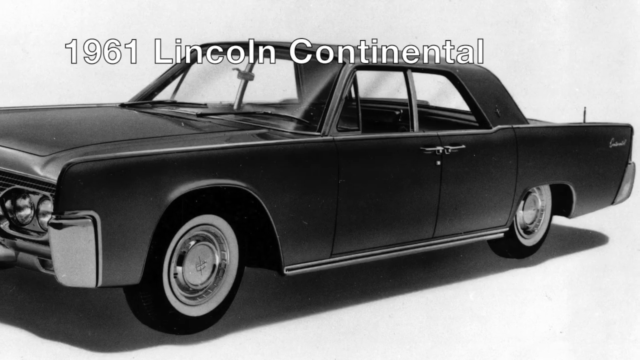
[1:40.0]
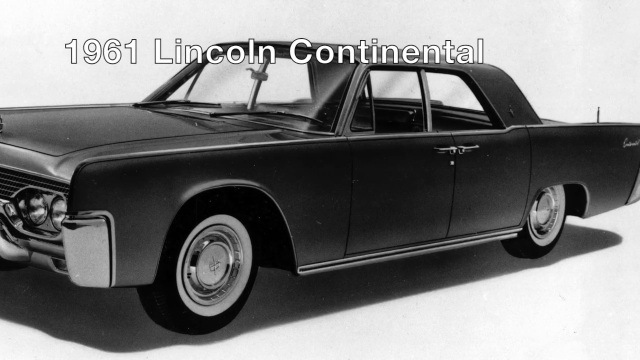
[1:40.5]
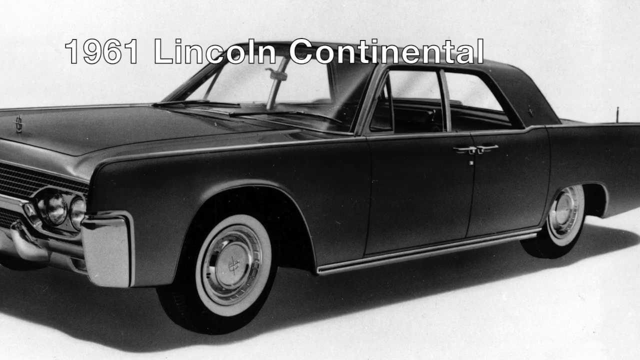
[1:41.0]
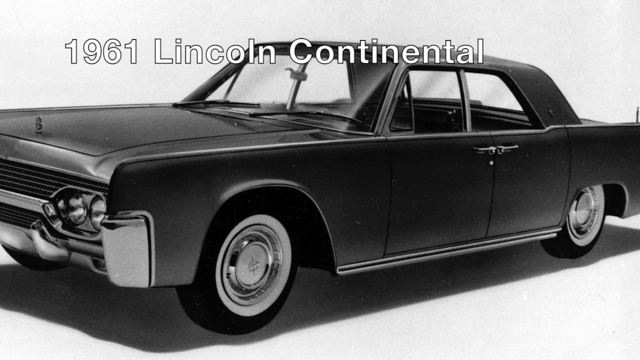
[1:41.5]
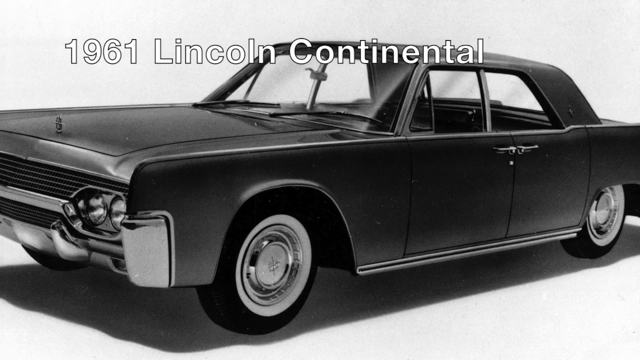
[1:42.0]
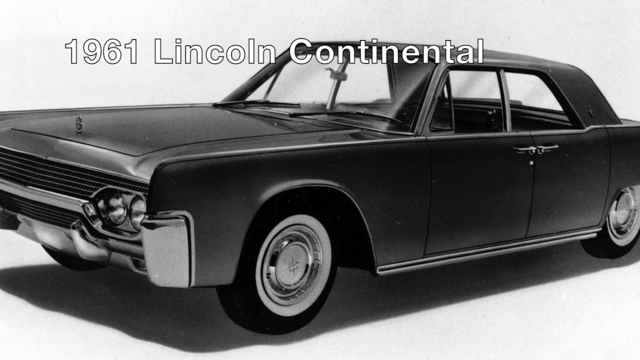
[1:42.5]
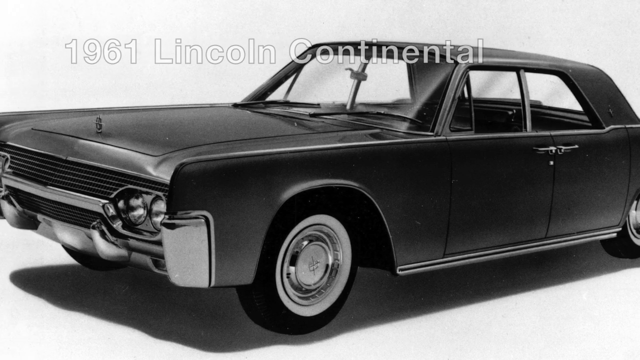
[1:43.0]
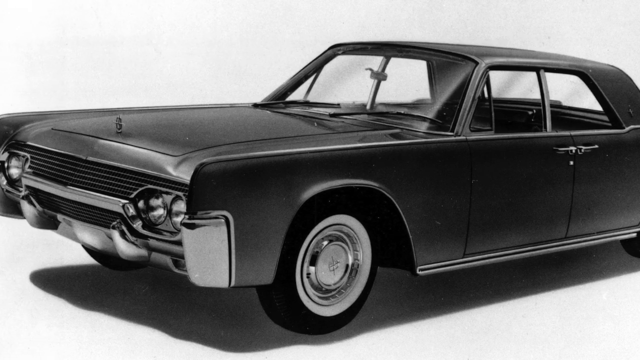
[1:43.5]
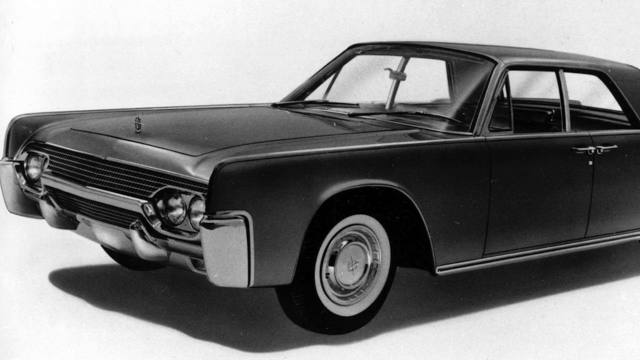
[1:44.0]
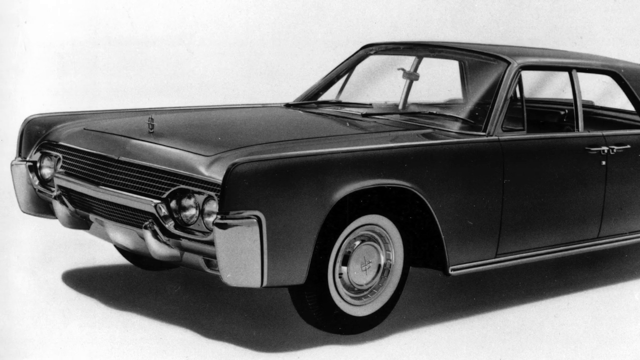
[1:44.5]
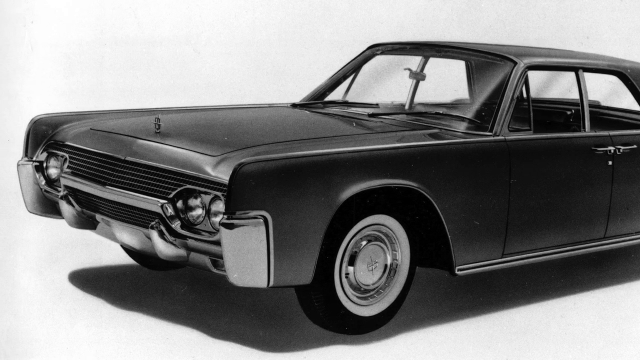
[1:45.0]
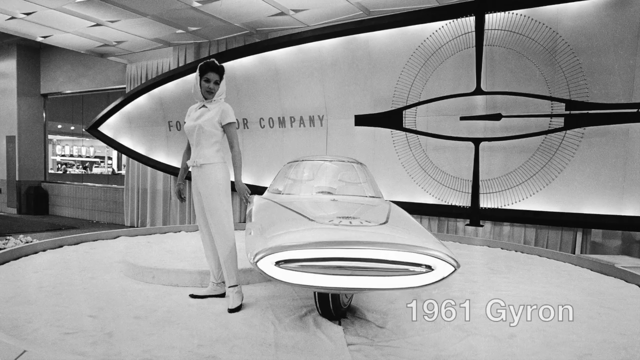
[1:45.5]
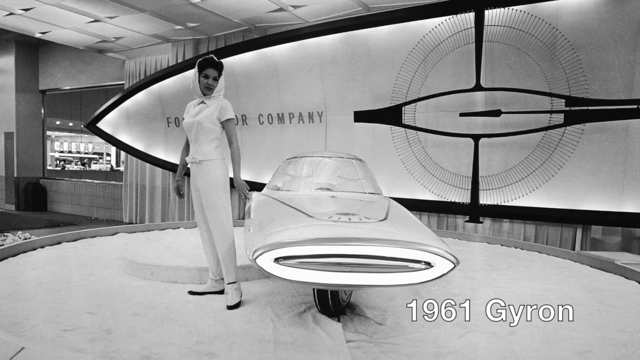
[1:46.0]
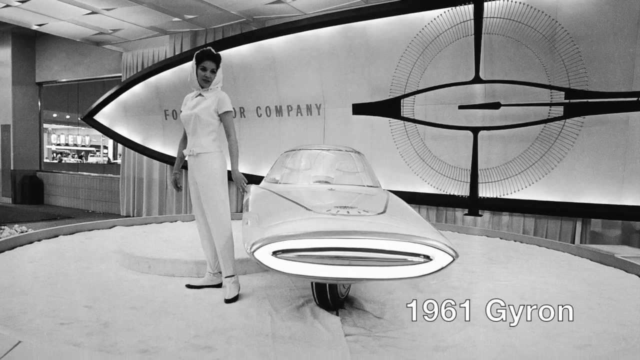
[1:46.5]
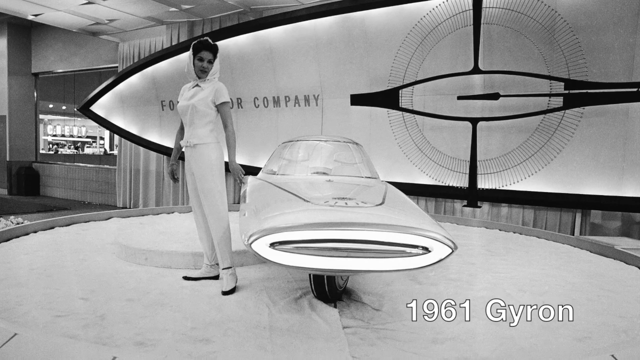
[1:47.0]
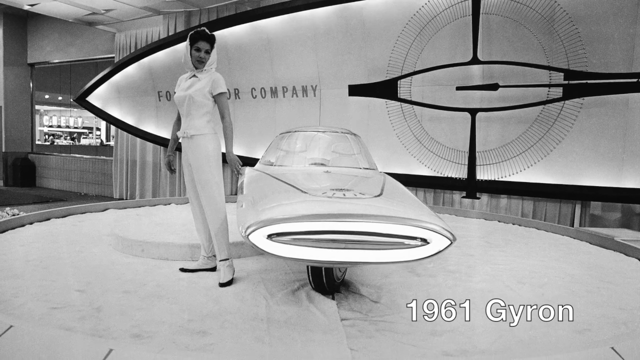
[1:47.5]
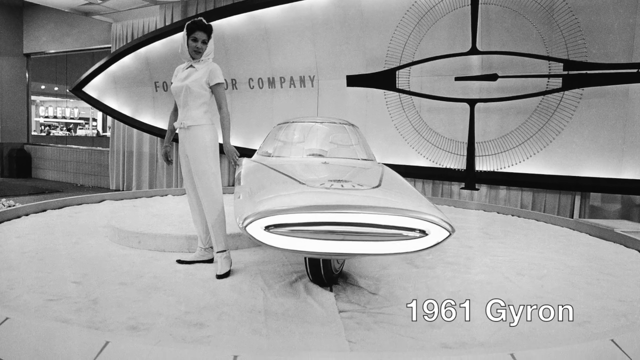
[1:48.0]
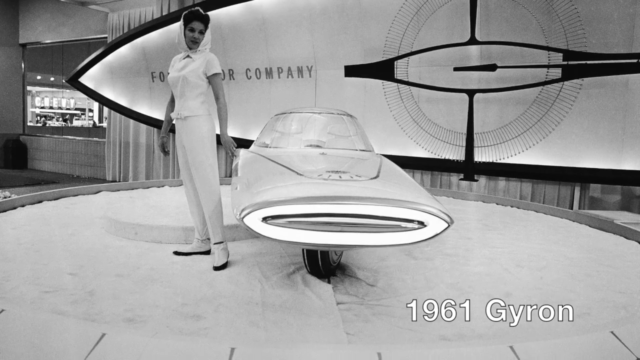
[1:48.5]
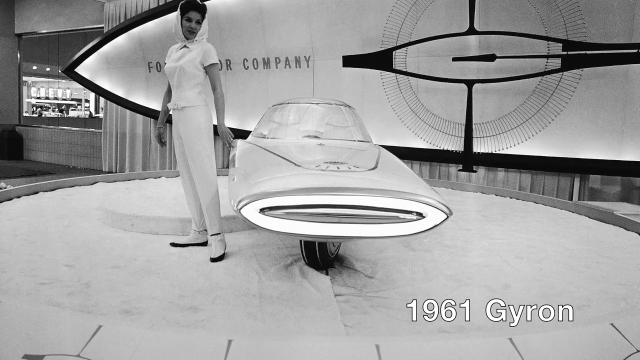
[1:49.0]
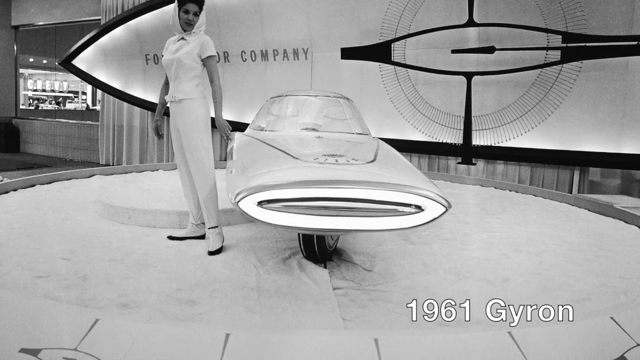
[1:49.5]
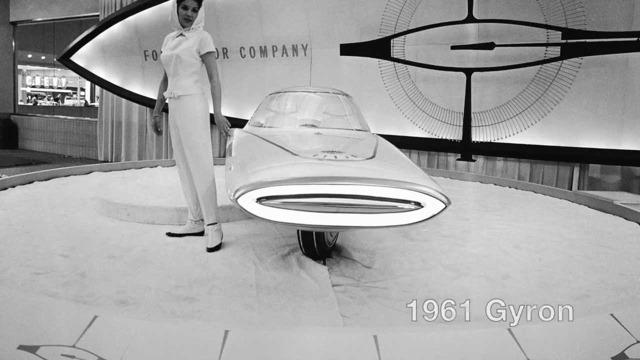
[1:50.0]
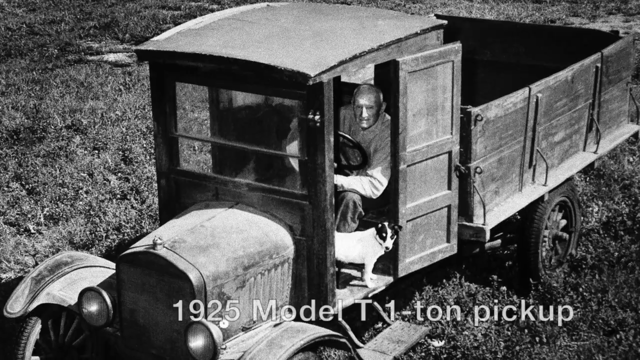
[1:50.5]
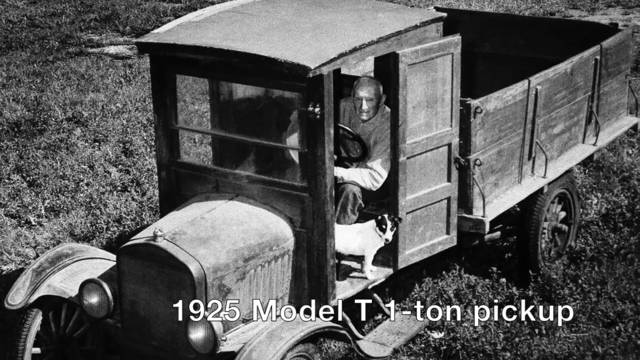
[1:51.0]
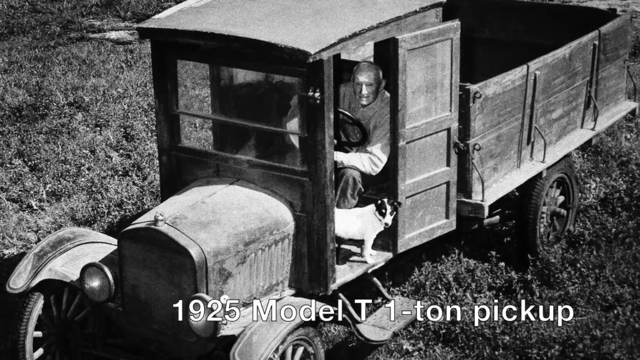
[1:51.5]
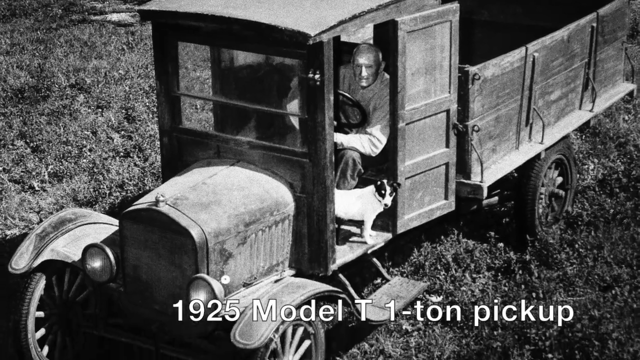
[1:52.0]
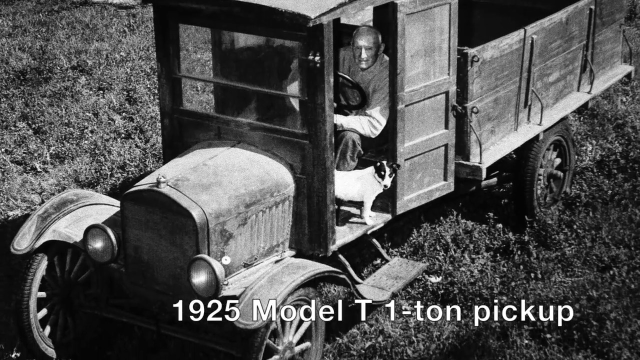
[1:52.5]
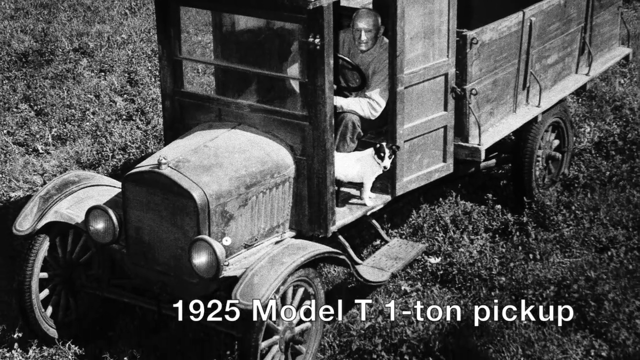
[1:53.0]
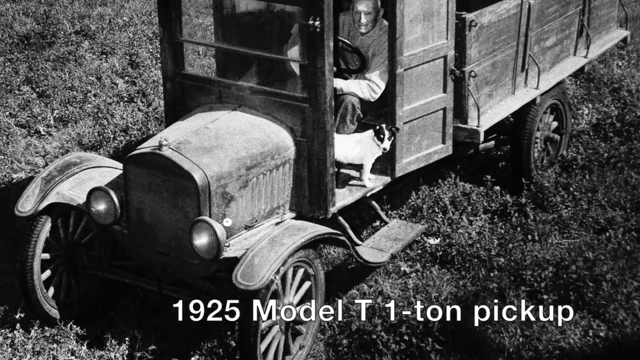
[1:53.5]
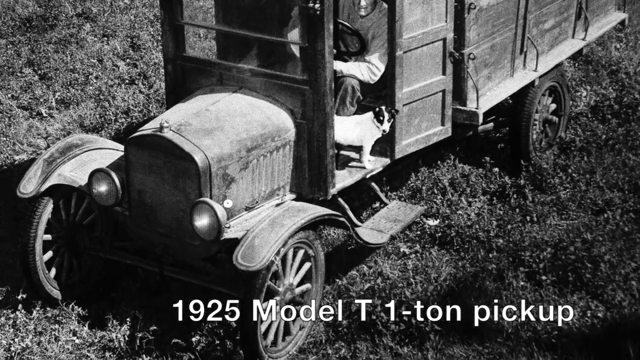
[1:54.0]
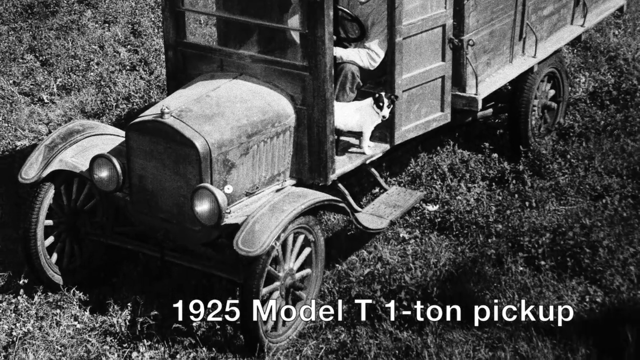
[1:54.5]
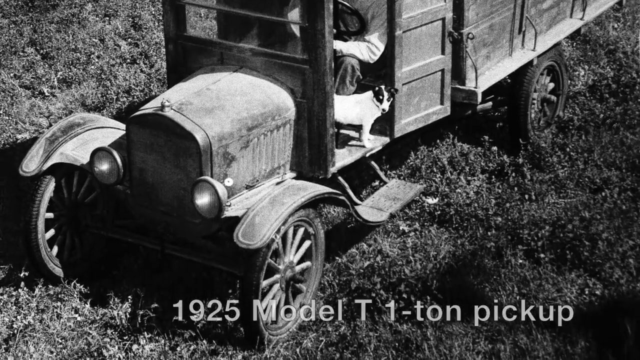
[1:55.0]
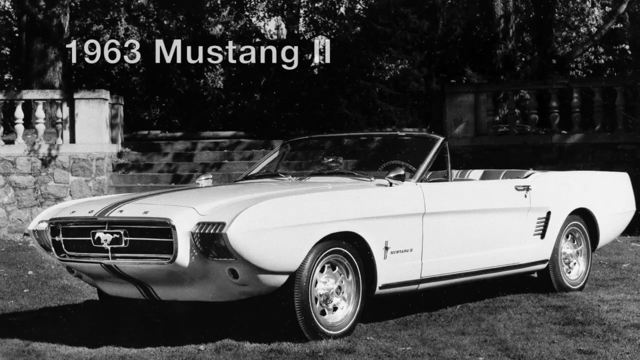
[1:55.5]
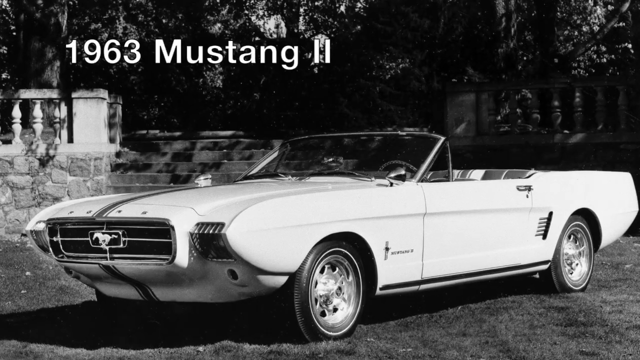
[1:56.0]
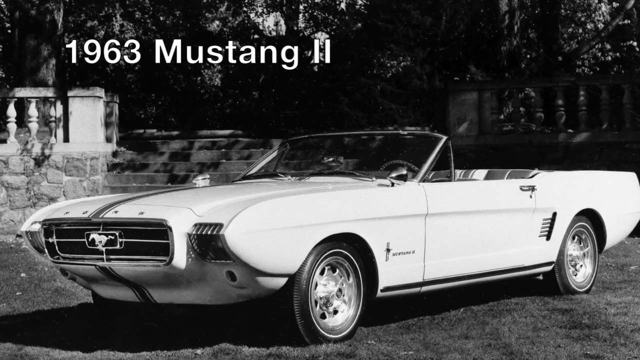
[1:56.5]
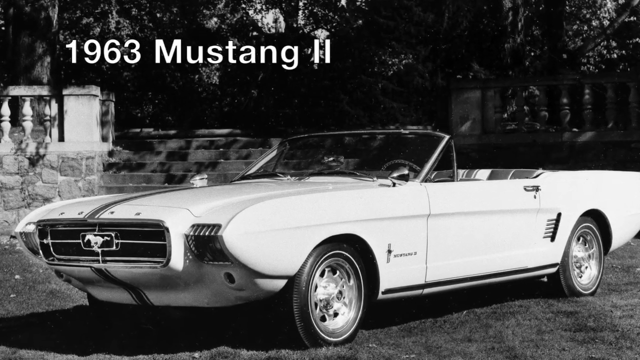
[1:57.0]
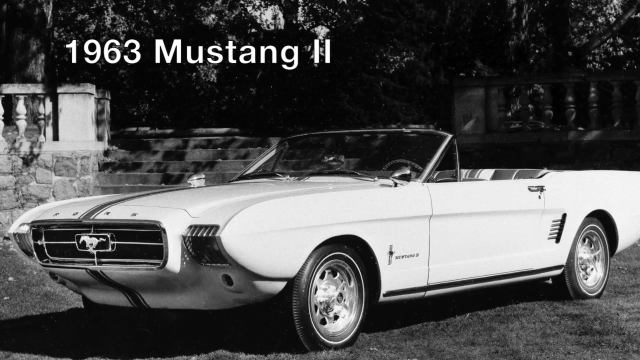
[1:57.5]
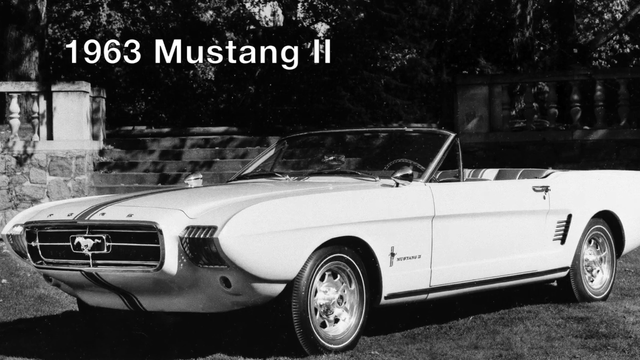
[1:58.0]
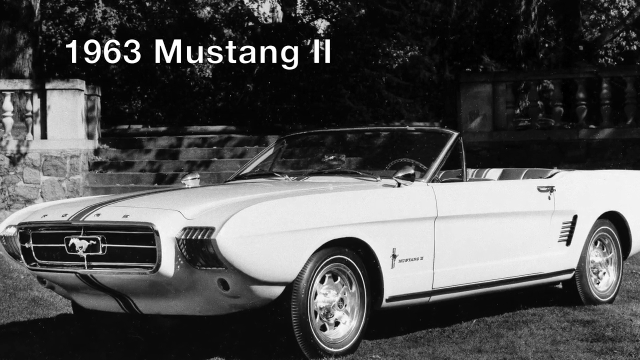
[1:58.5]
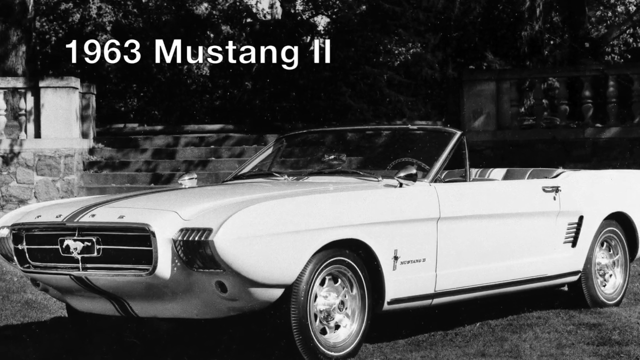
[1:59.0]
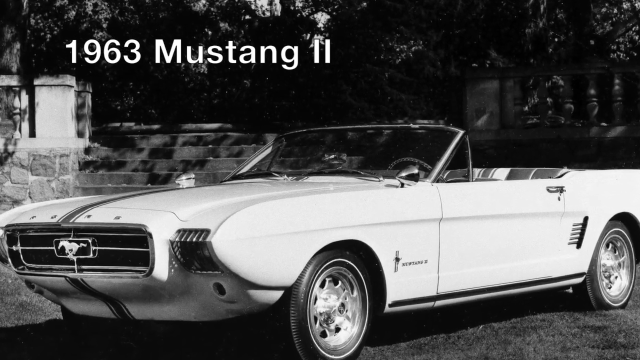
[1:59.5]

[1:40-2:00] A photo shows the 1961 Lincoln Continental, a massive vehicle with very flat sides and dual twin headlights. Next is a 1961 Gyron concept vehicle made by Ford, very space age, with an oval-shaped illuminated front light instead of round headlights; the traditional four-wheel configuration is not visible, and it is likely a concept vehicle. It is followed by a 1925 Model T, a one-ton pickup with a large bed in the back. The images then segue to the 1963 Mustang II, a fairly long vehicle.